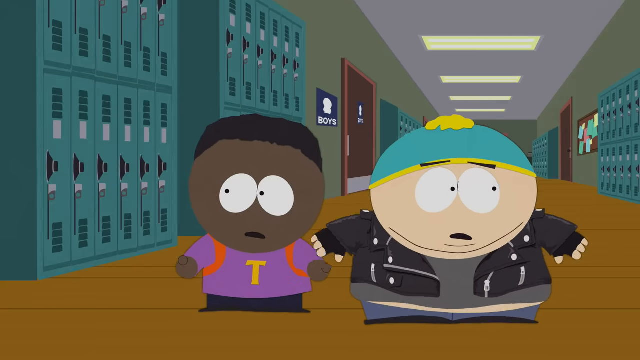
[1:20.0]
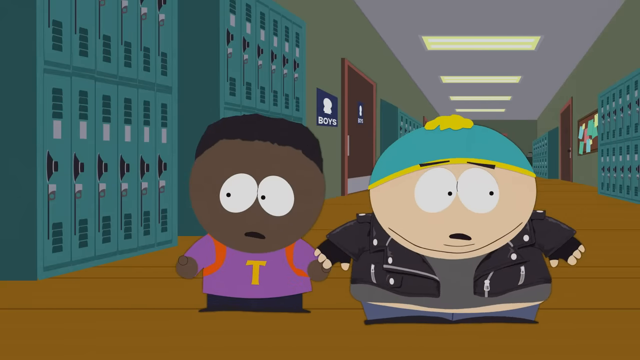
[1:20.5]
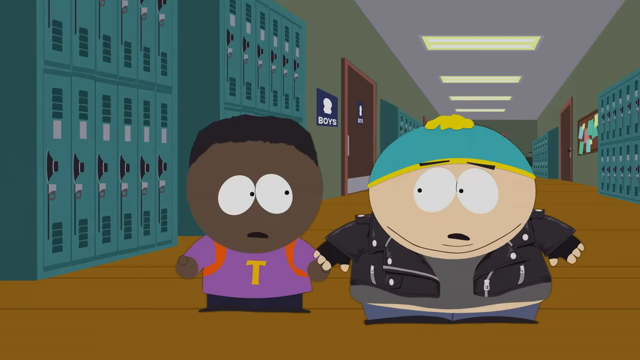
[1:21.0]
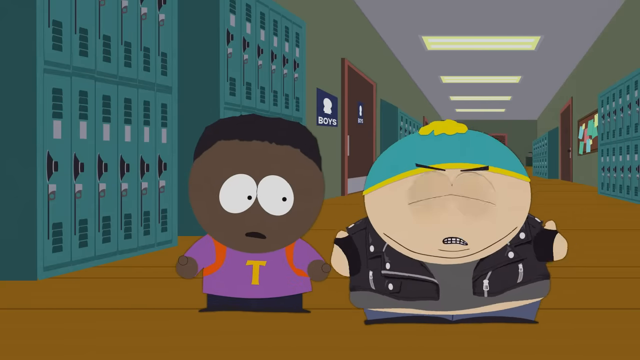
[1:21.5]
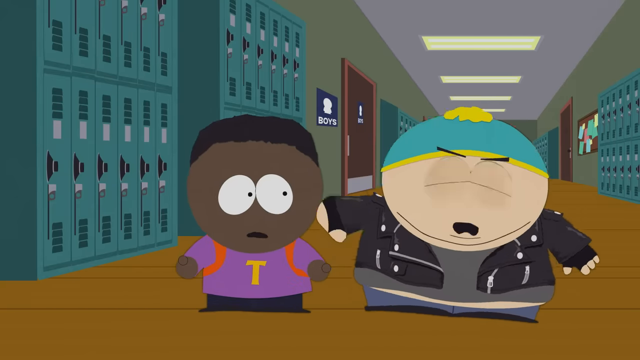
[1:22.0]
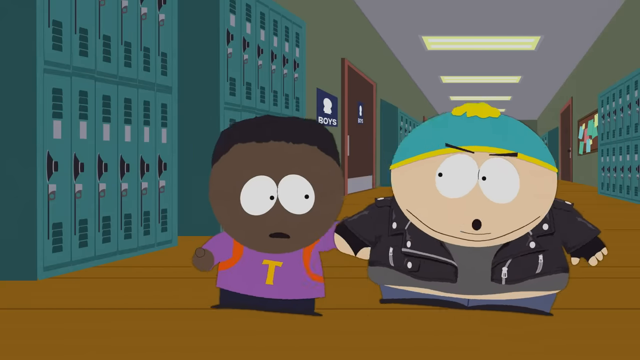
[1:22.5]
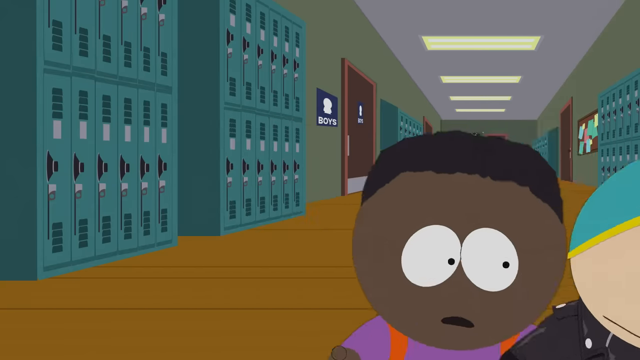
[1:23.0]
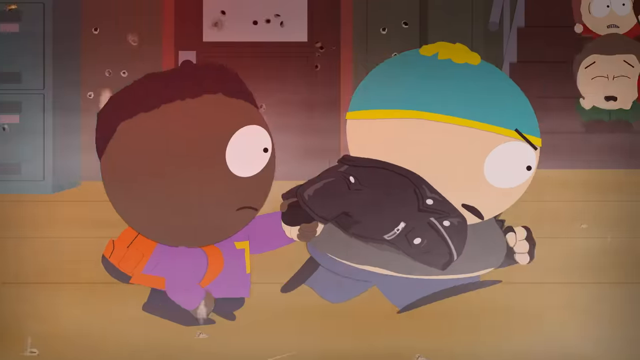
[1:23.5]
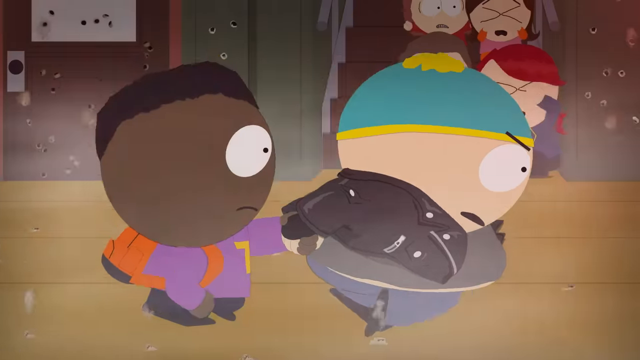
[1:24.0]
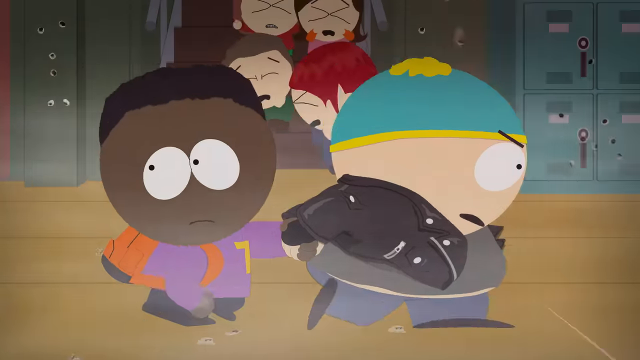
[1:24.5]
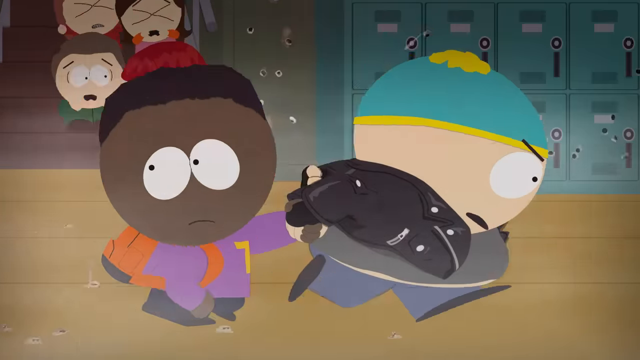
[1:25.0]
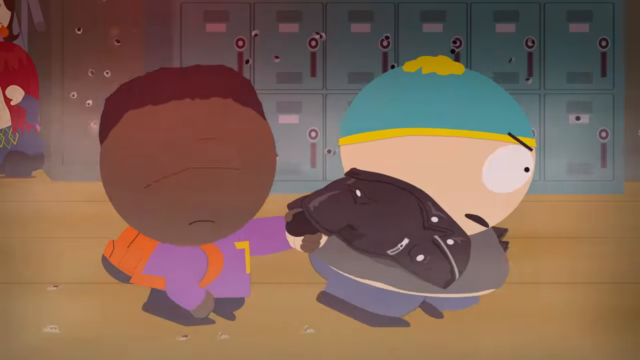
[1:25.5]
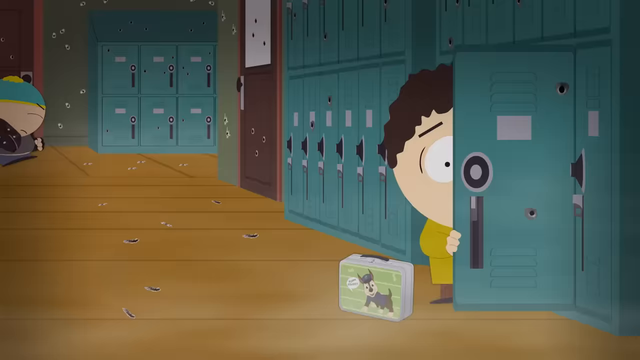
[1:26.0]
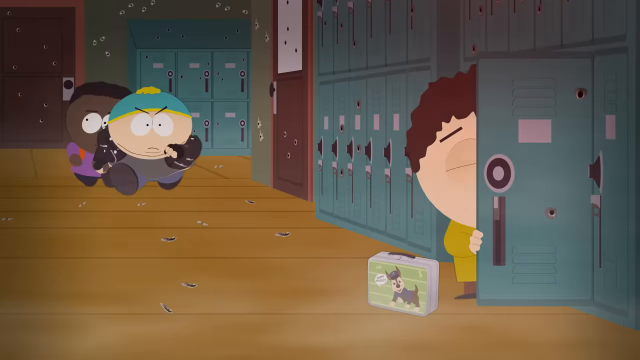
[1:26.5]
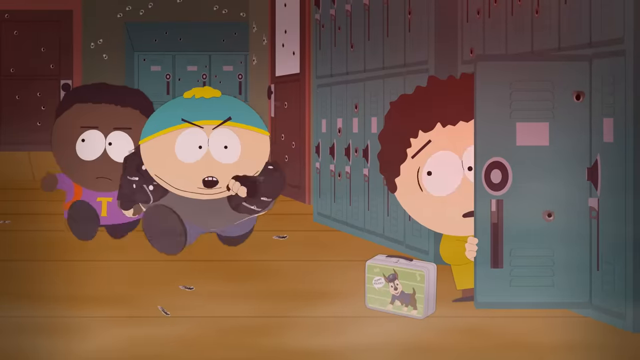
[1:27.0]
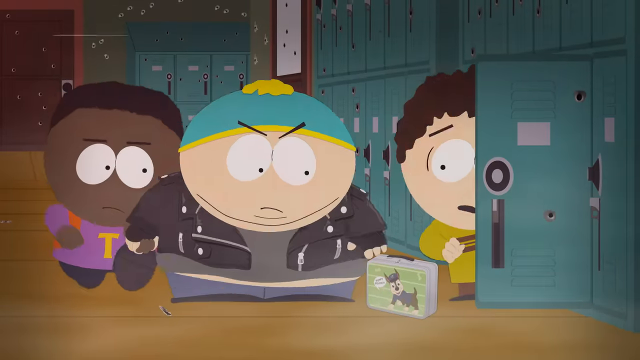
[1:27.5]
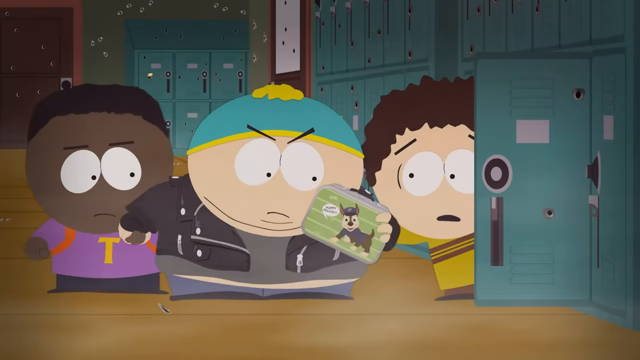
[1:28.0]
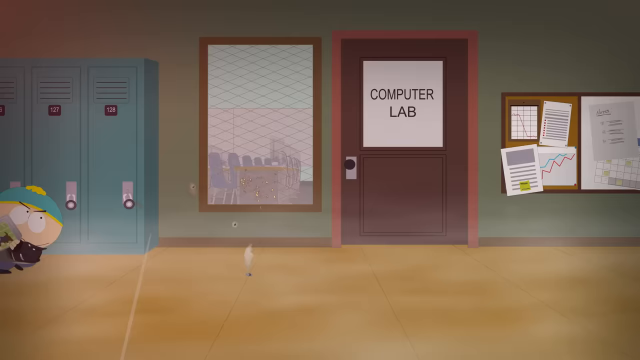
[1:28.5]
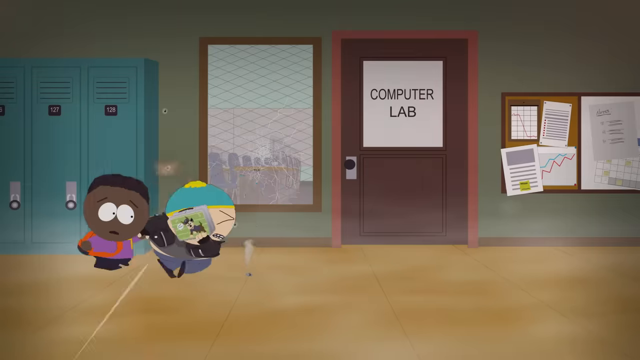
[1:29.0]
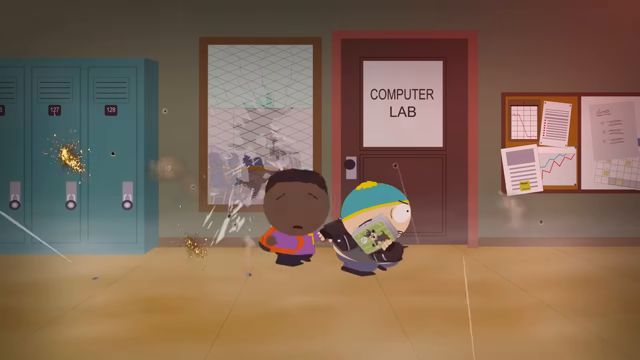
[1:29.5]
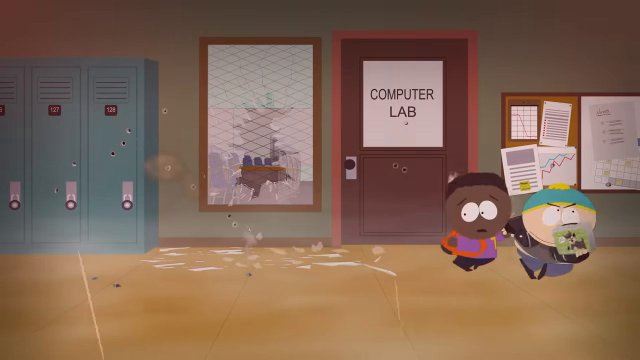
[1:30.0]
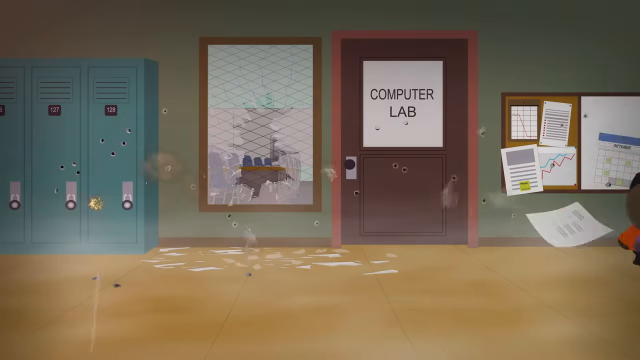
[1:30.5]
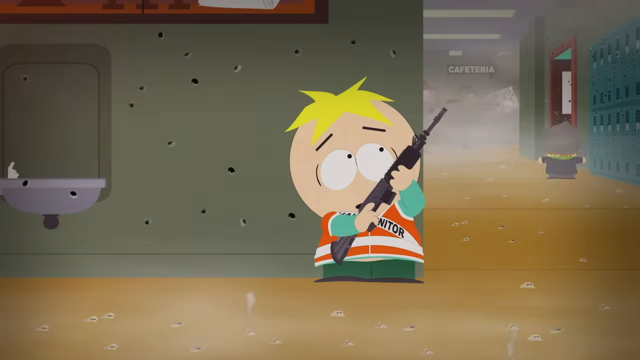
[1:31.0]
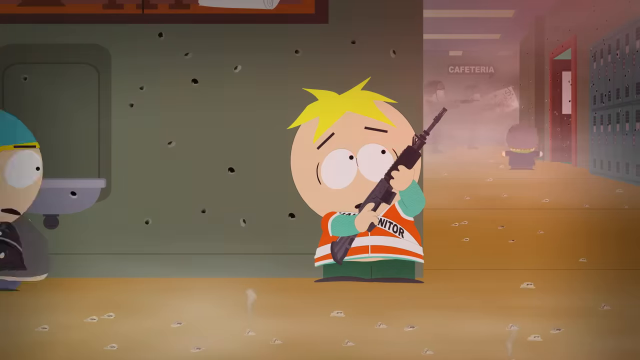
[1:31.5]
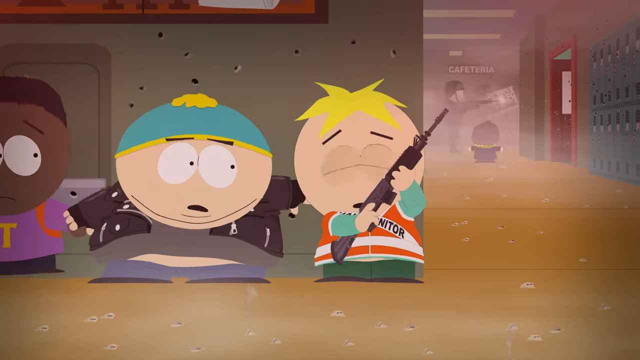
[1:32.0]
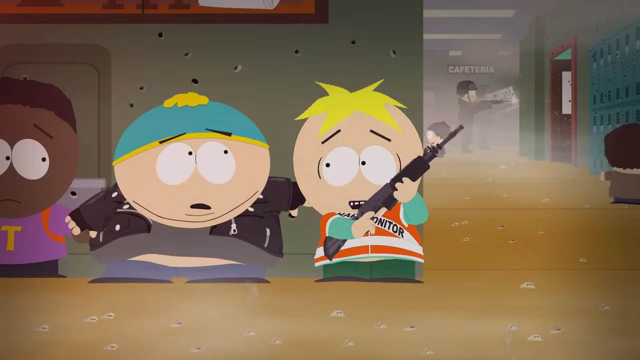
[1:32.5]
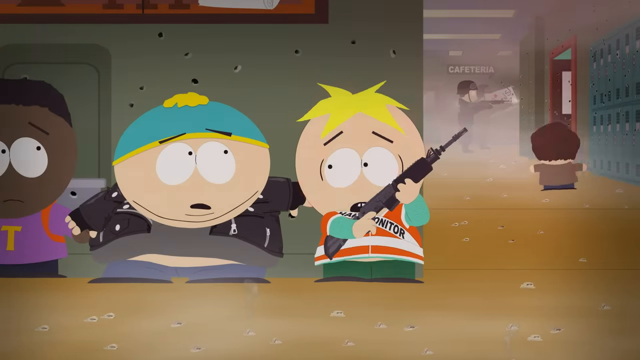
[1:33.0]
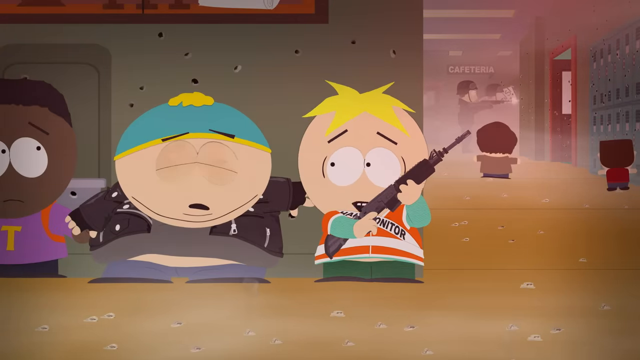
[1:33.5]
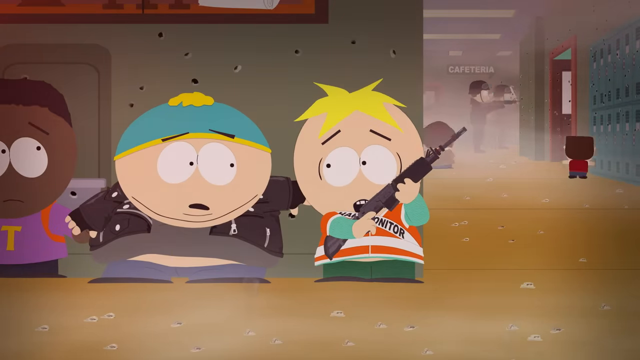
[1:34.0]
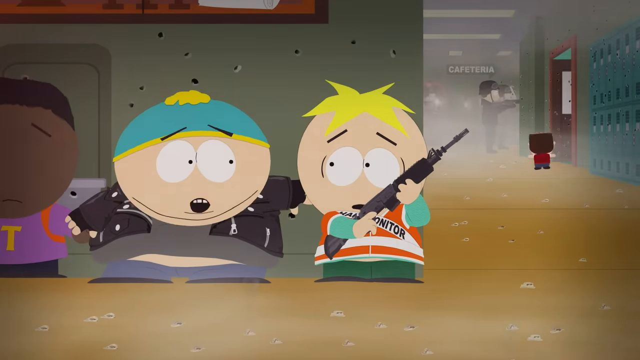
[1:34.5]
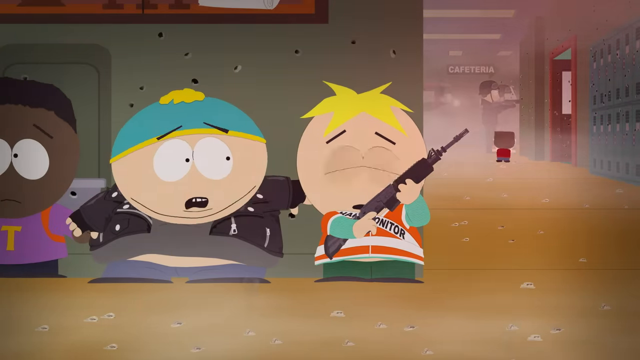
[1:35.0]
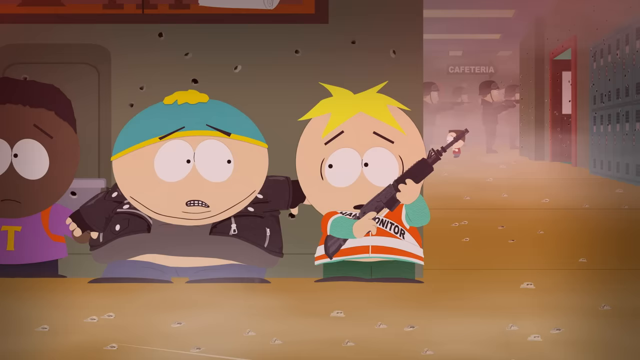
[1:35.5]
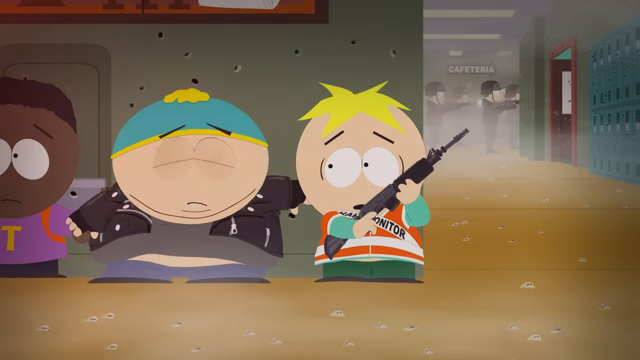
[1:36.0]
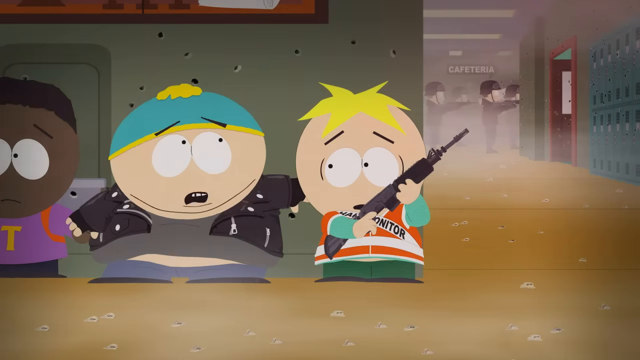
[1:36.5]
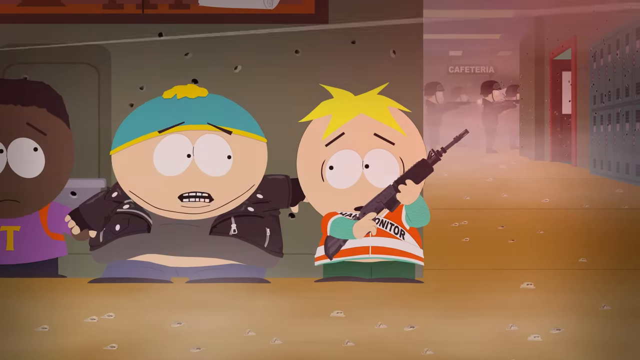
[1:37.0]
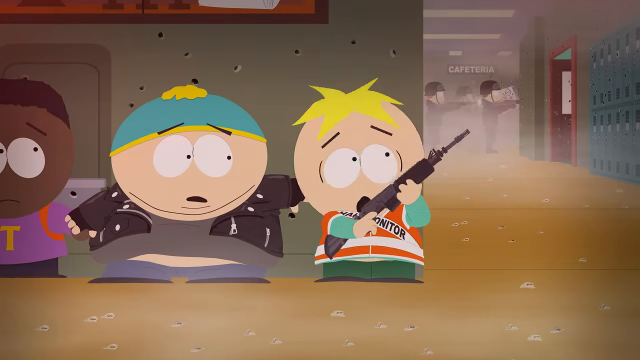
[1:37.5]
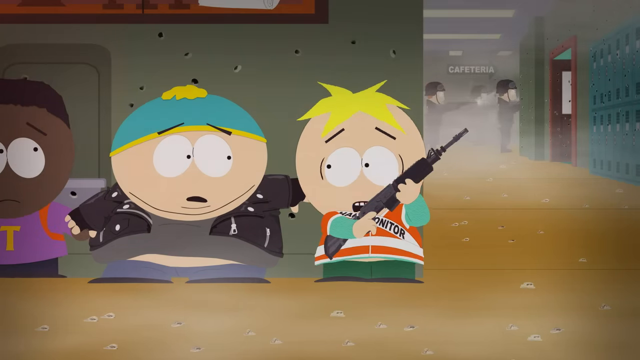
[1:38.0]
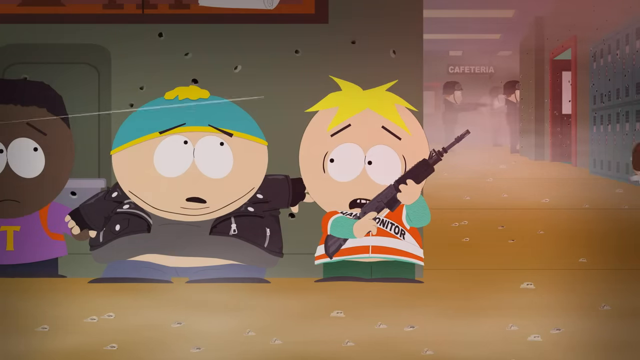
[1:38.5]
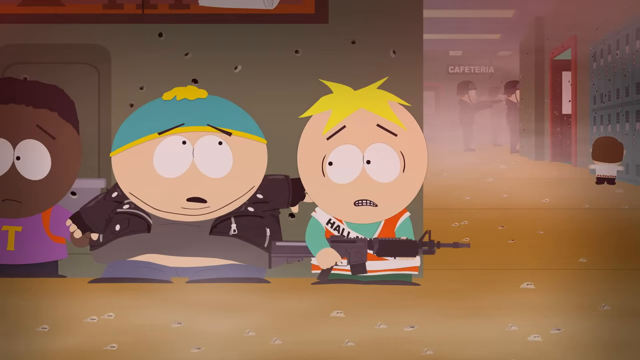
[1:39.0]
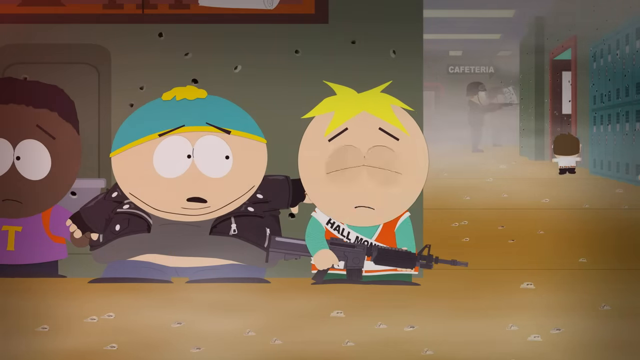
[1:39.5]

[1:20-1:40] The two characters walk down the hallway, which has lockers on either side, with the door of the boys' bathroom behind them to the left. Each of them looks left and right. The boy in the leather jacket grabs the hand of the boy in the purple top and runs around. There appears to be lots of shooting going on in the background between some police officers or SWAT officers wearing black helmets and a young boy with blonde hair wearing a sash that says "Hall Monitor". Bullets fly around, hitting the lockers, and multiple children are scared and crying. One little boy with brown curly hair and a yellow and brown striped shirt hides behind the door of one of the lockers on the right-hand side of the image. The two characters, still running and holding hands, come towards him. The character in the leather jacket grabs the hiding boy's lunchbox, which appears to be a metal cuboid with an image of a little dog on the front, and holds it up in front of him as a shield against the bullets. It is not clear who is firing or who is attacking the school.